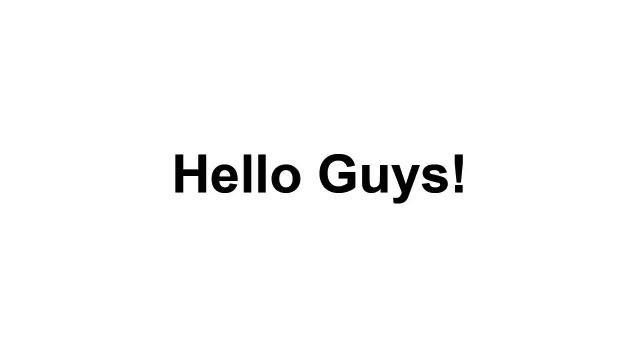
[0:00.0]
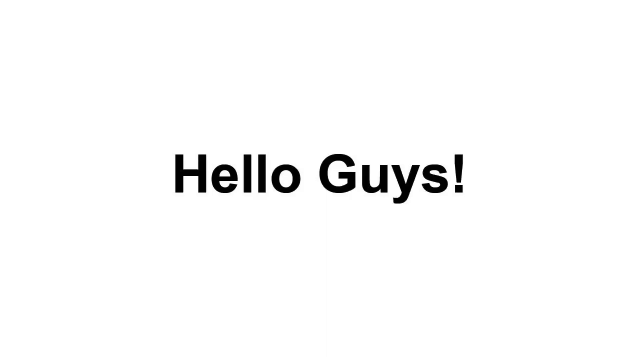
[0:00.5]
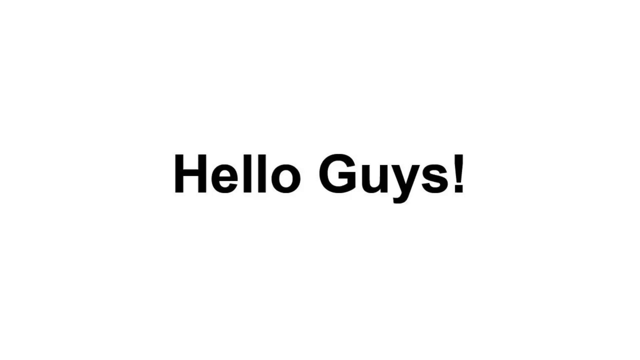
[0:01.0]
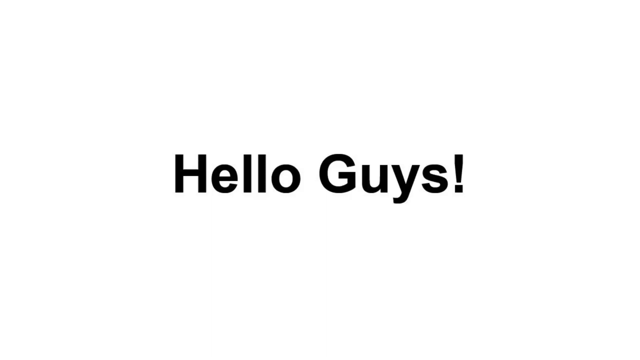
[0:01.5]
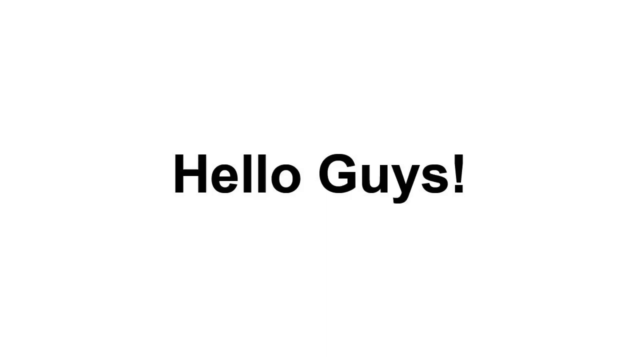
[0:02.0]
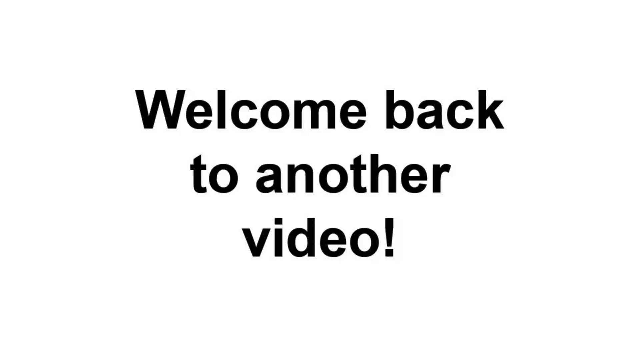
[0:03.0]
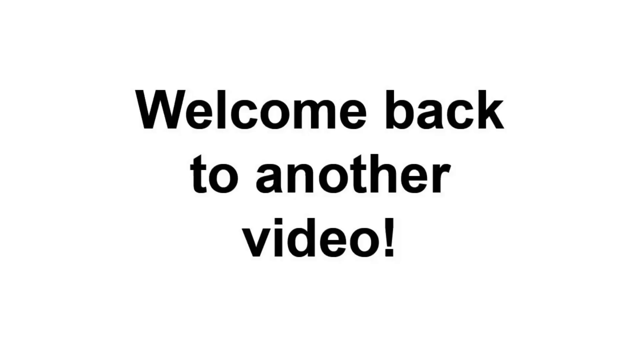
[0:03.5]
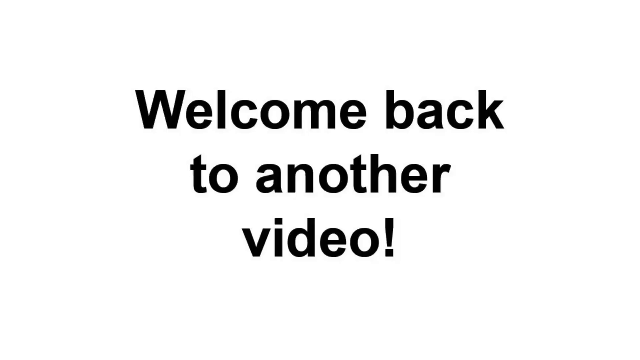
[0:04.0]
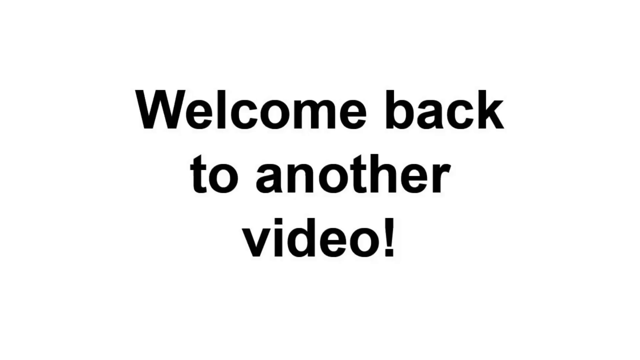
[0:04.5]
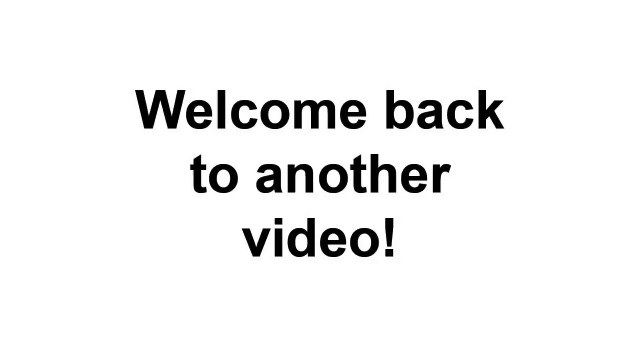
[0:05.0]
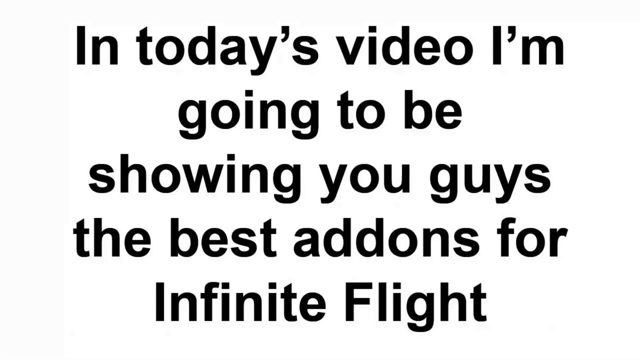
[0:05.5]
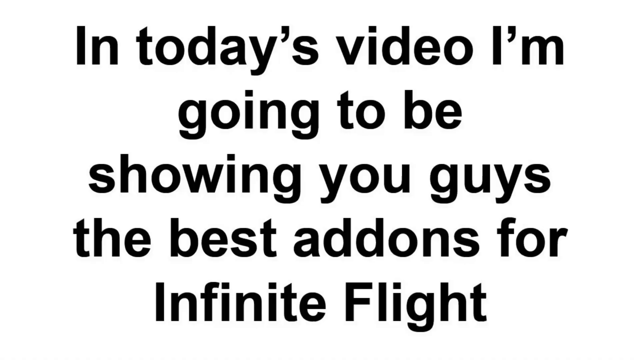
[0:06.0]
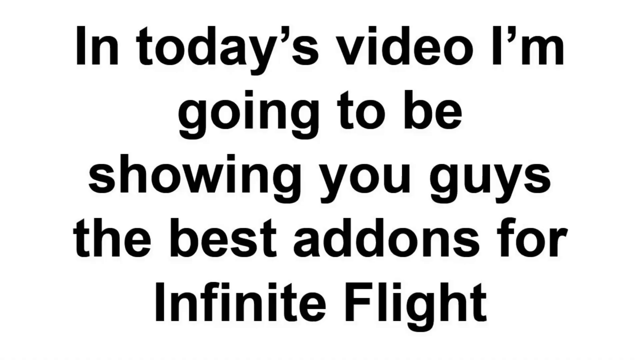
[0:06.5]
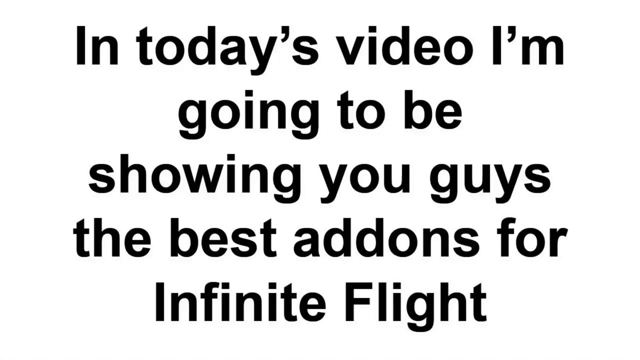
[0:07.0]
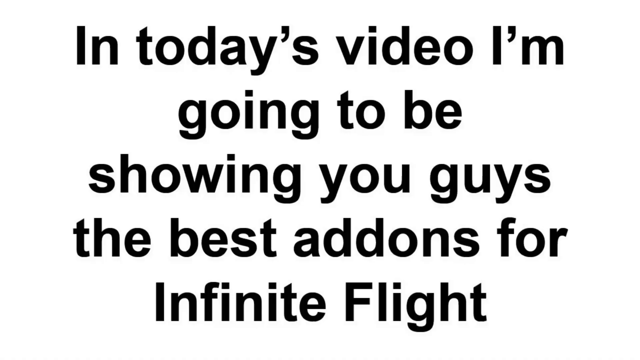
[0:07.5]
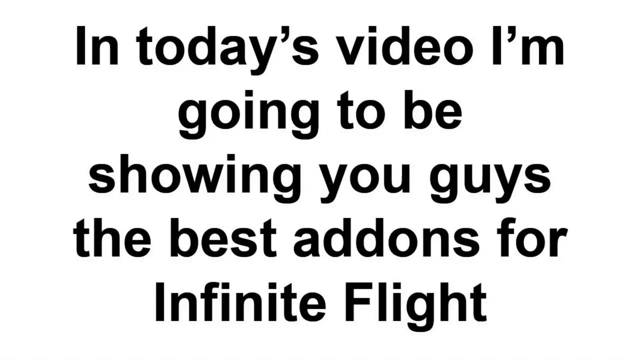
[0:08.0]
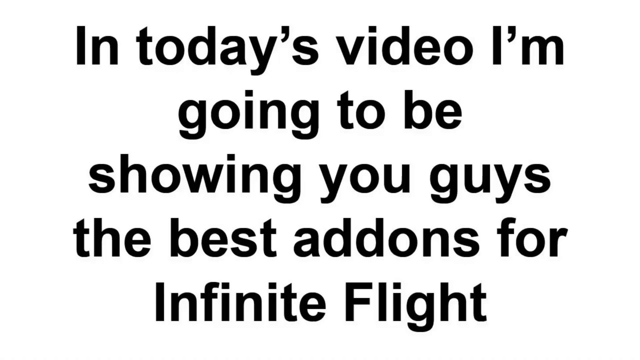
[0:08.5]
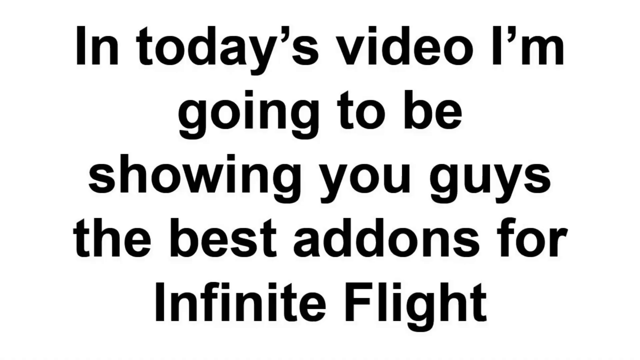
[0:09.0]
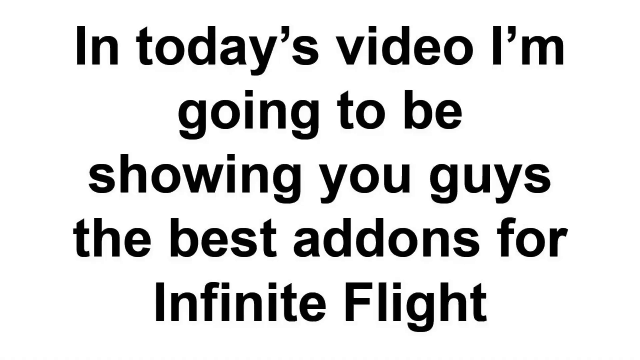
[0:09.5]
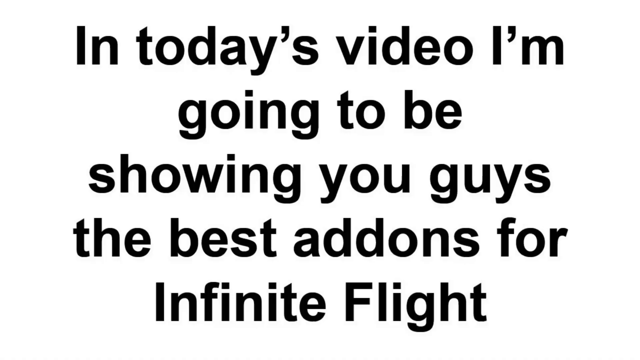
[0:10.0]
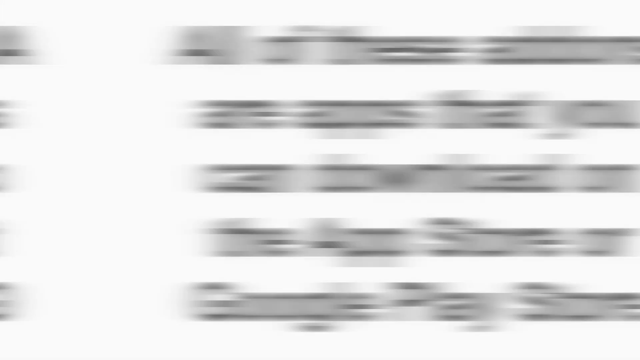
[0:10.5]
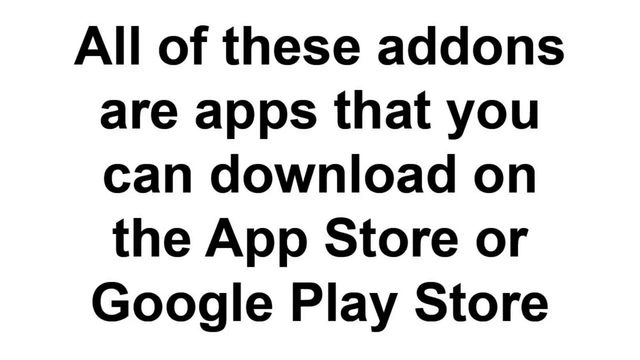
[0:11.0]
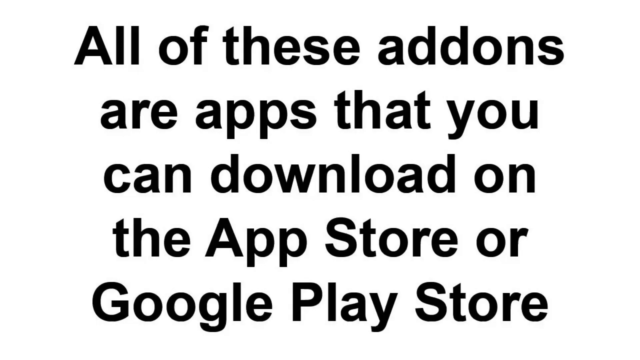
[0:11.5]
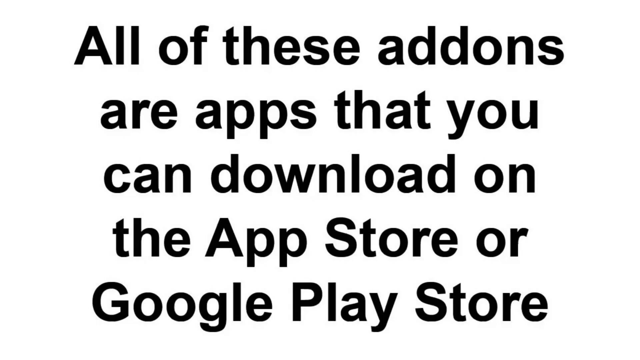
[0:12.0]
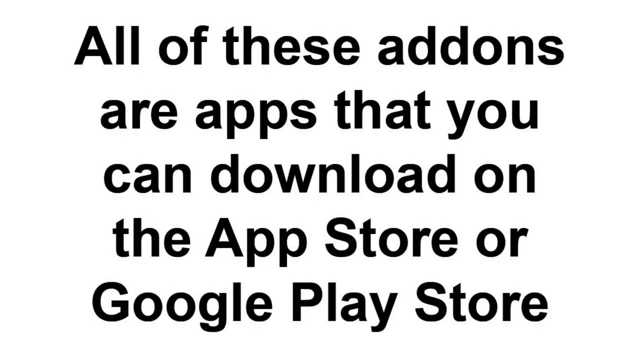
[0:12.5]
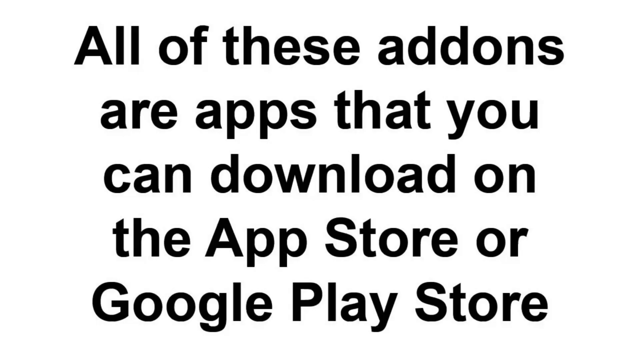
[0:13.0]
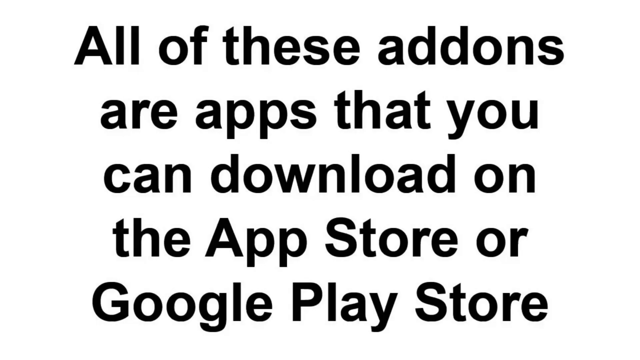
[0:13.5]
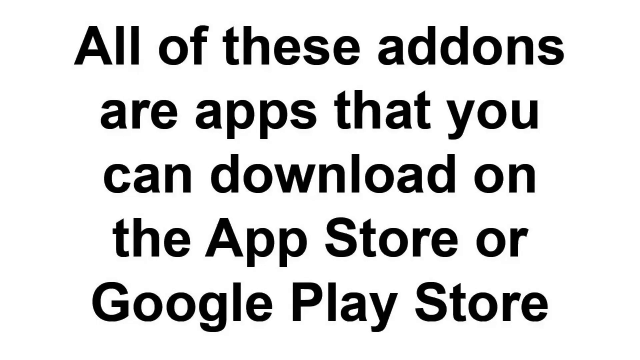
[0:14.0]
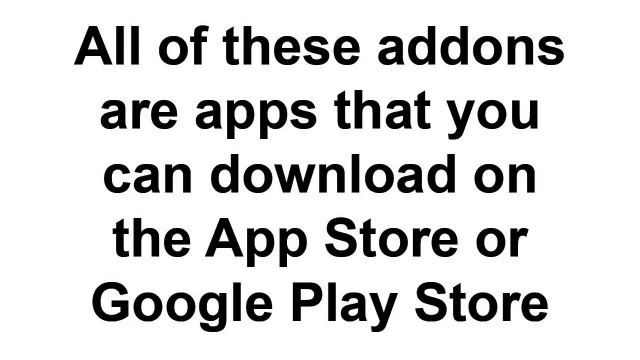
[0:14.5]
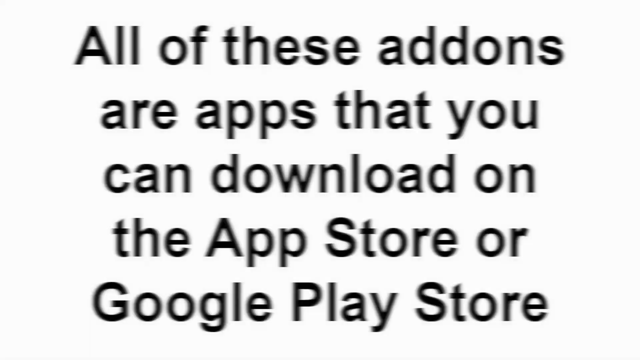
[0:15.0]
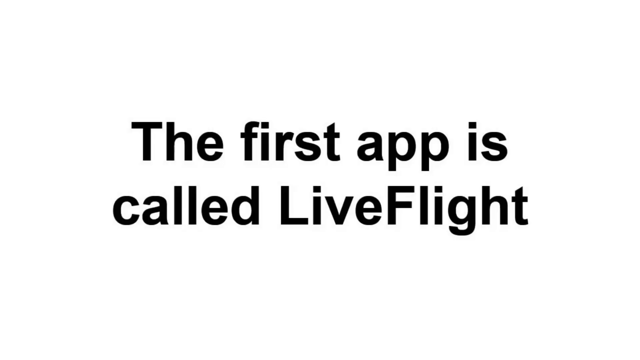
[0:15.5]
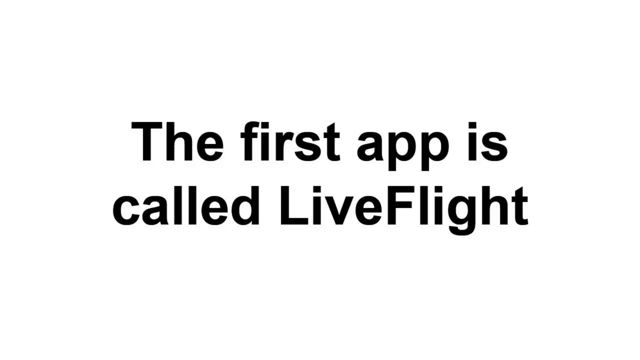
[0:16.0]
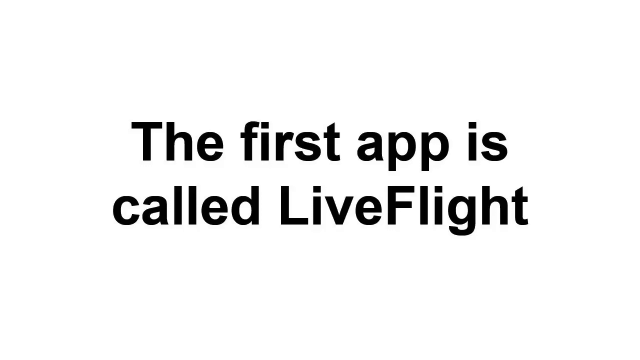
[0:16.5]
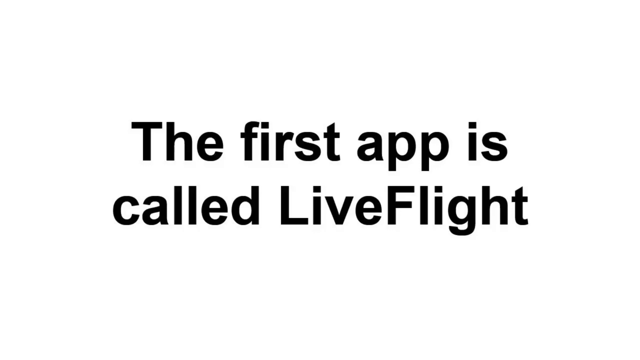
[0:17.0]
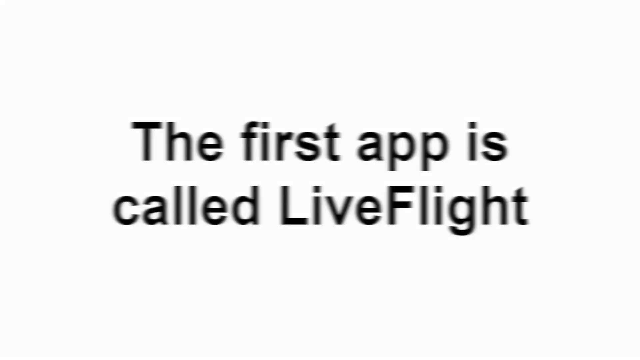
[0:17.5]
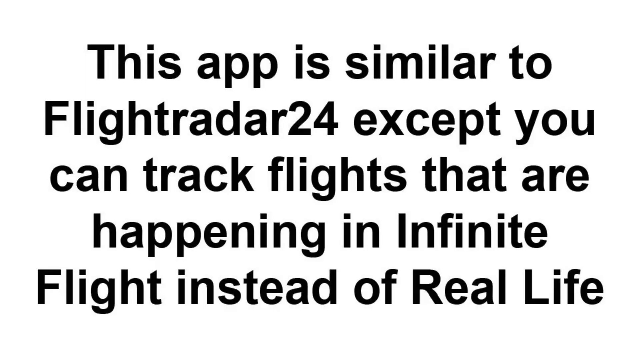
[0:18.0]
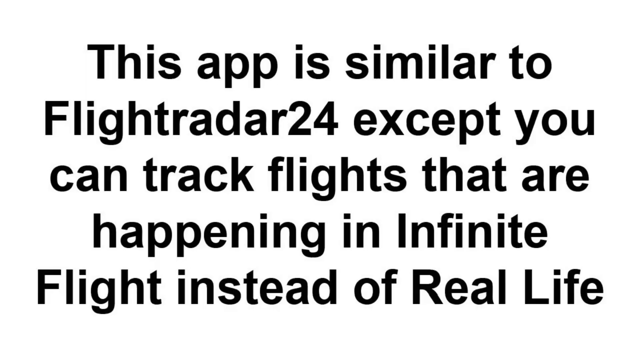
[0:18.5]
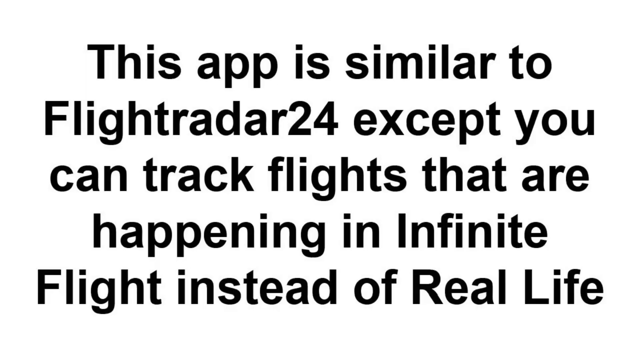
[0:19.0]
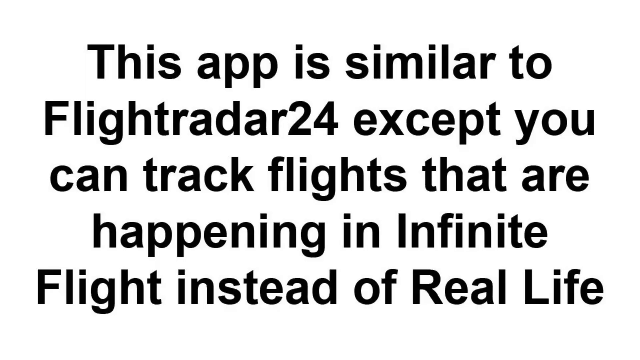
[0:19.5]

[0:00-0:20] The video opens on text that reads "hello, guys, welcome back to another video." It then transitions to a screen that reads "in today's video, I'm going to be showing you guys the best add-ons for Infinite Flight," which seems to be some type of game. Further text says "all of the add-ons or apps that you could download on the App Store or Google Play Store" and "The first app is called Live Flight," followed by "This app is similar to Flightradar24, except you can track flights that are happening in Infinite Flight instead of real life."